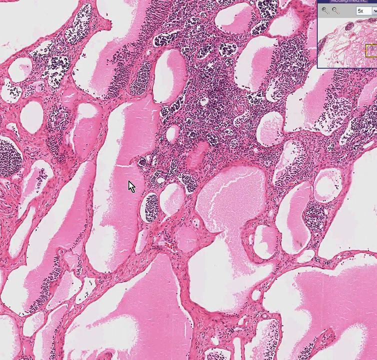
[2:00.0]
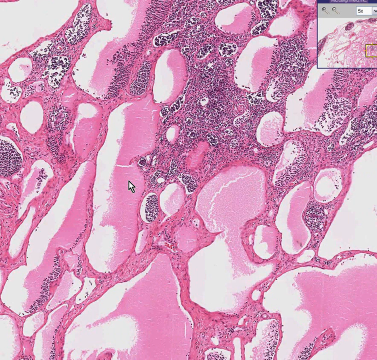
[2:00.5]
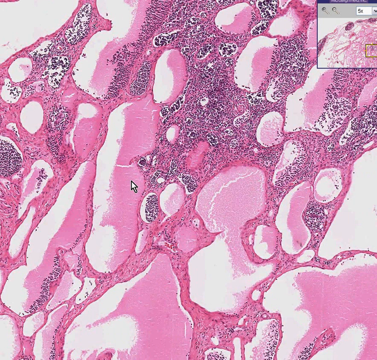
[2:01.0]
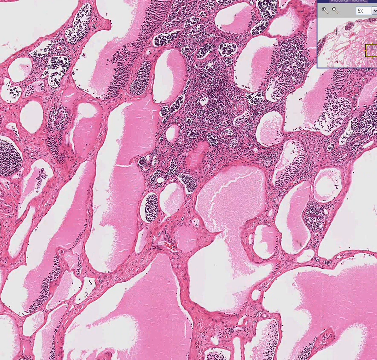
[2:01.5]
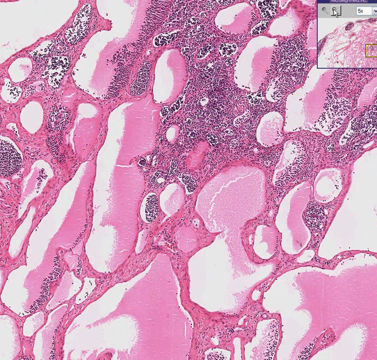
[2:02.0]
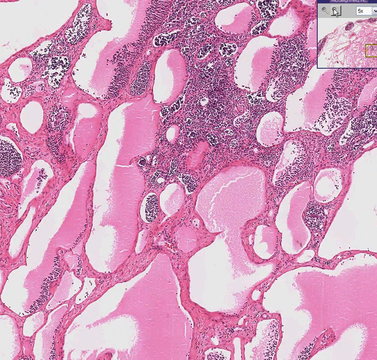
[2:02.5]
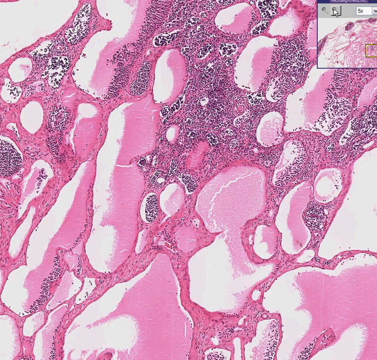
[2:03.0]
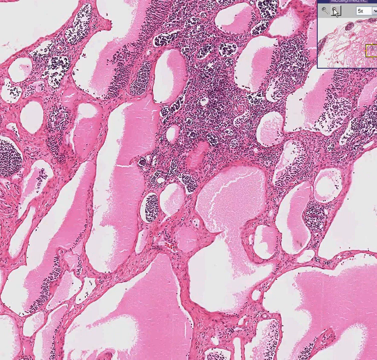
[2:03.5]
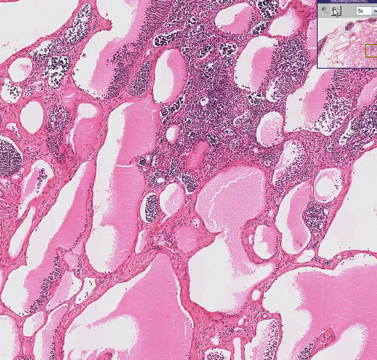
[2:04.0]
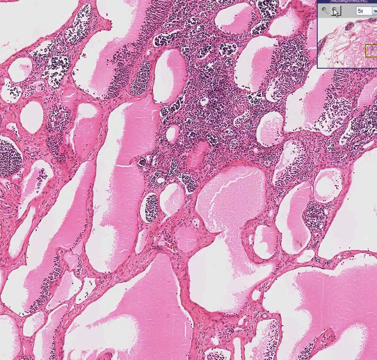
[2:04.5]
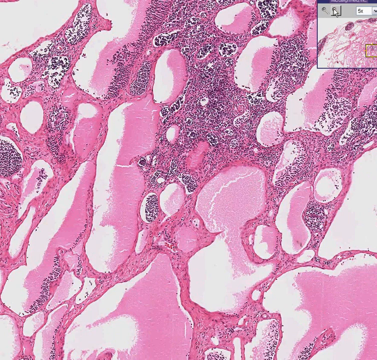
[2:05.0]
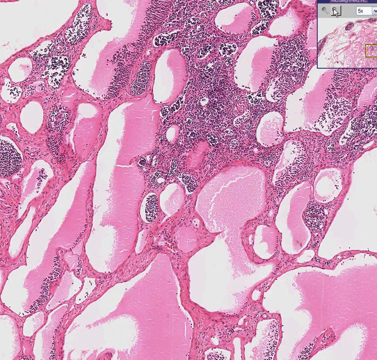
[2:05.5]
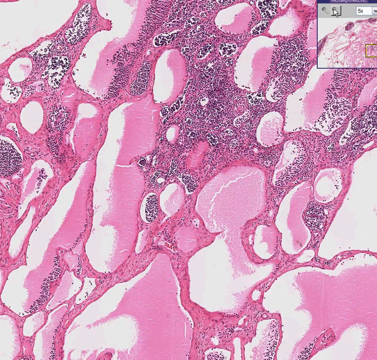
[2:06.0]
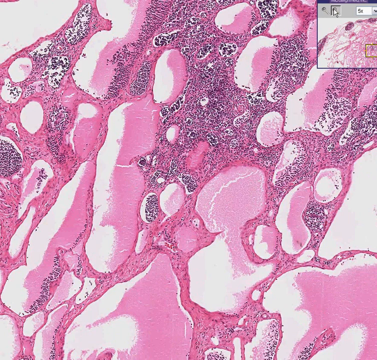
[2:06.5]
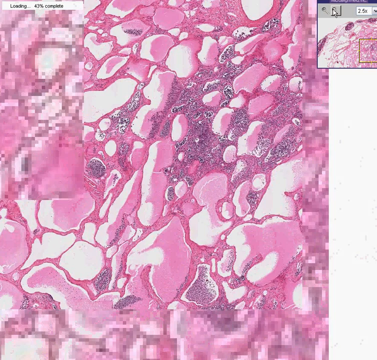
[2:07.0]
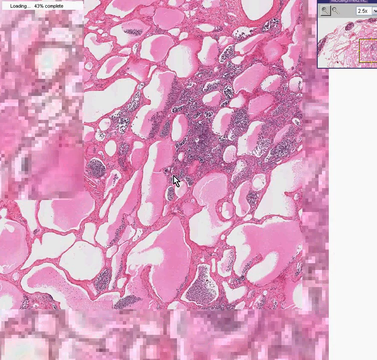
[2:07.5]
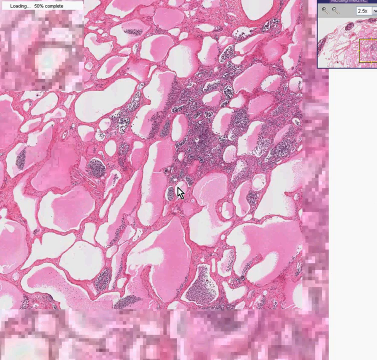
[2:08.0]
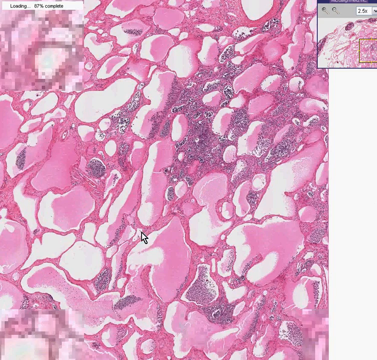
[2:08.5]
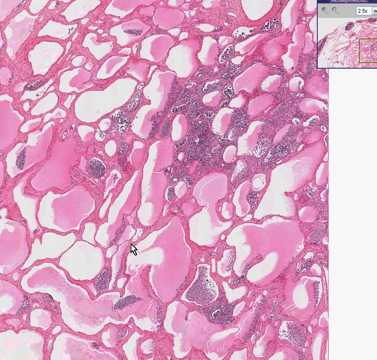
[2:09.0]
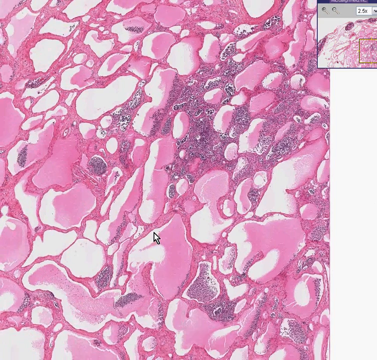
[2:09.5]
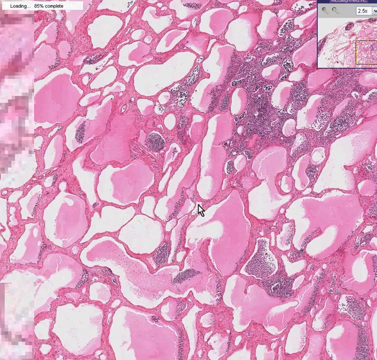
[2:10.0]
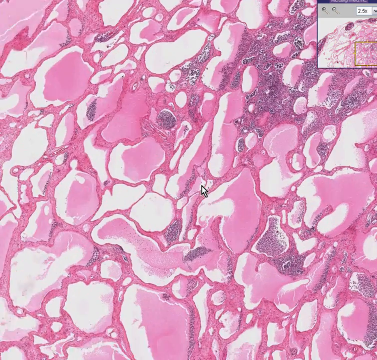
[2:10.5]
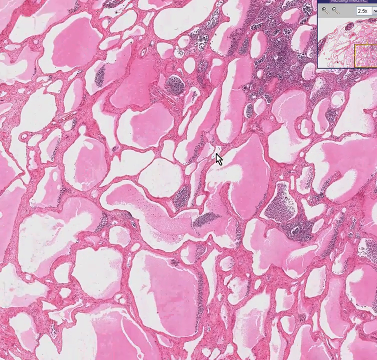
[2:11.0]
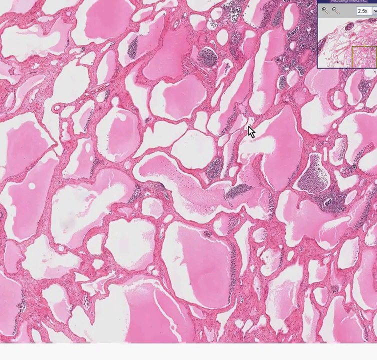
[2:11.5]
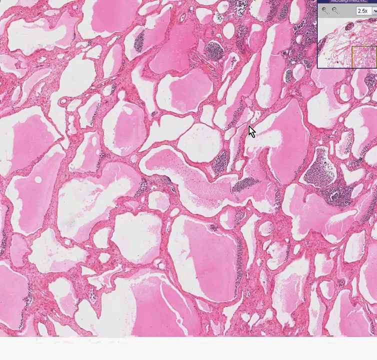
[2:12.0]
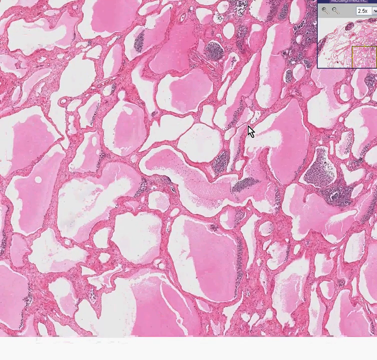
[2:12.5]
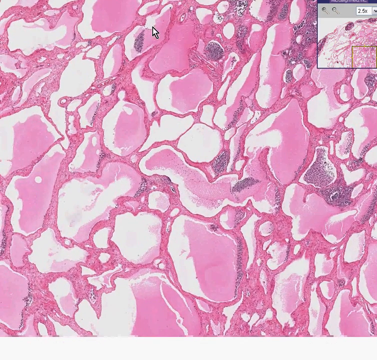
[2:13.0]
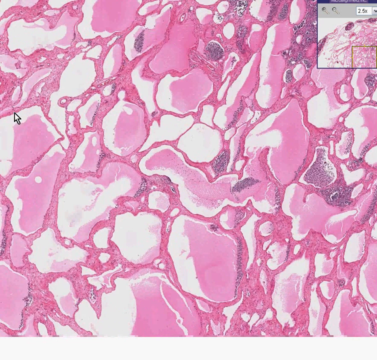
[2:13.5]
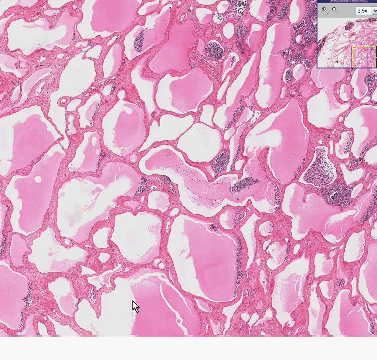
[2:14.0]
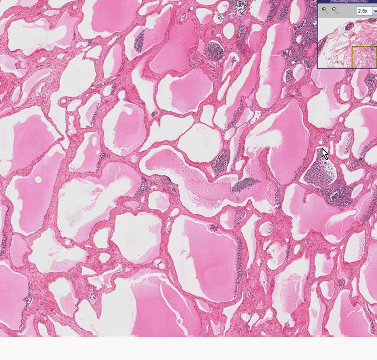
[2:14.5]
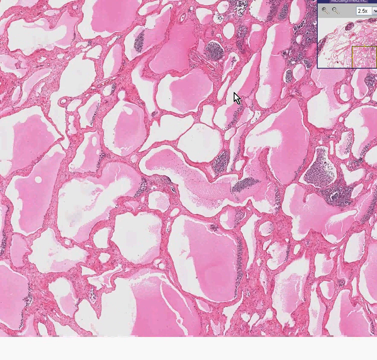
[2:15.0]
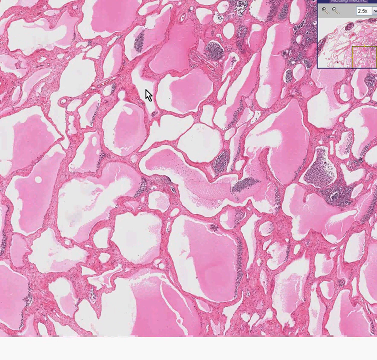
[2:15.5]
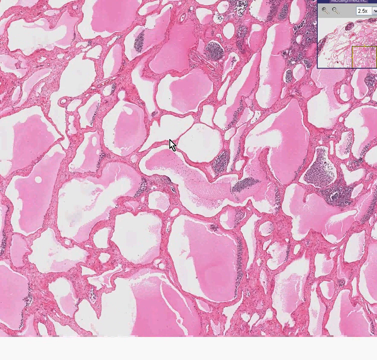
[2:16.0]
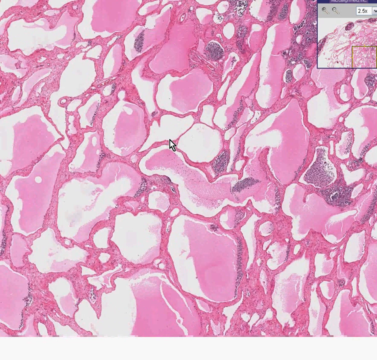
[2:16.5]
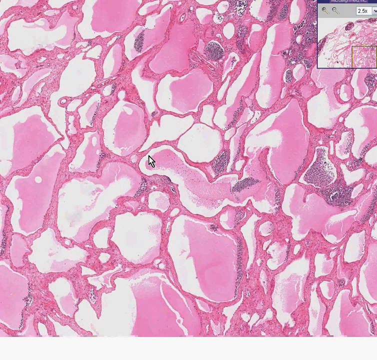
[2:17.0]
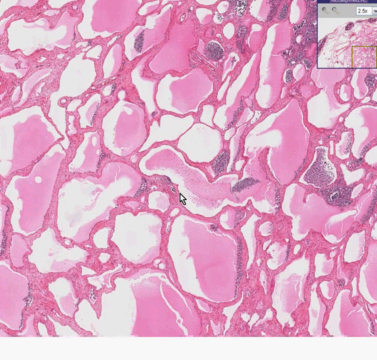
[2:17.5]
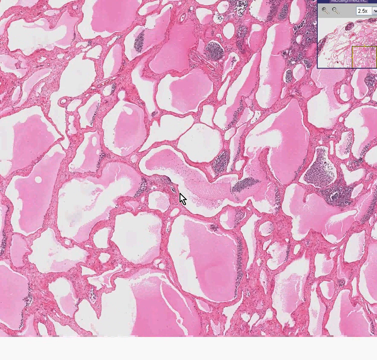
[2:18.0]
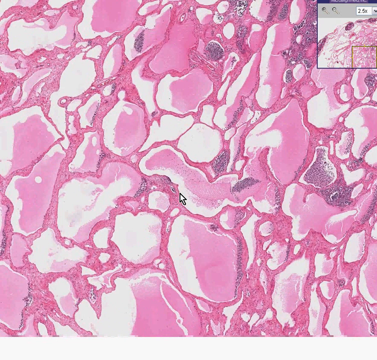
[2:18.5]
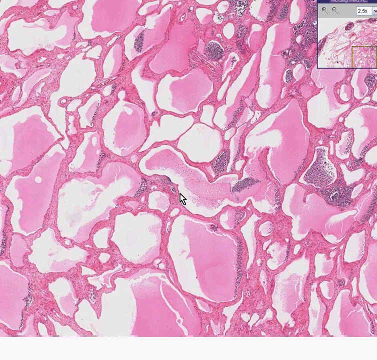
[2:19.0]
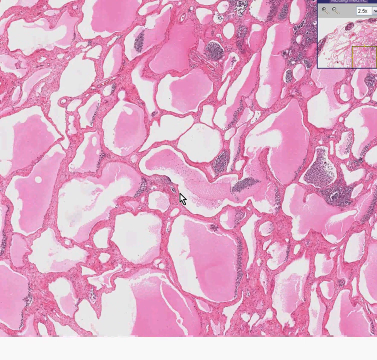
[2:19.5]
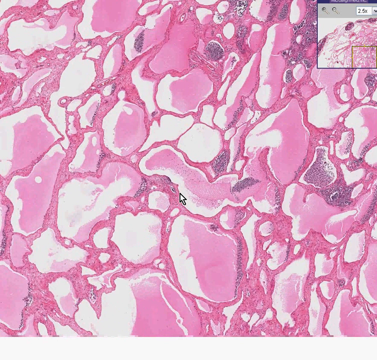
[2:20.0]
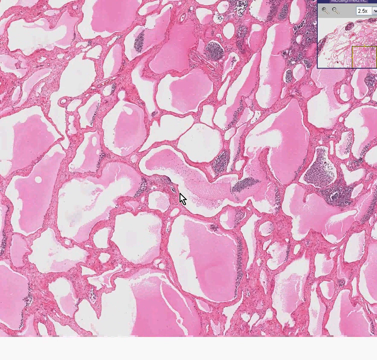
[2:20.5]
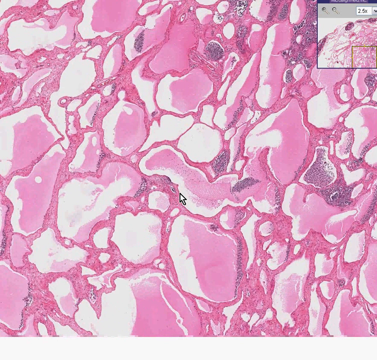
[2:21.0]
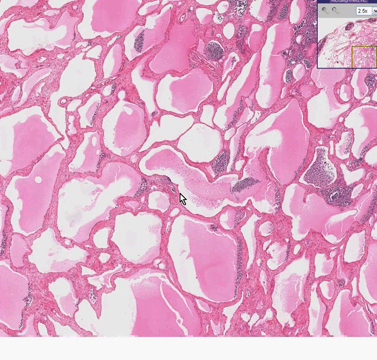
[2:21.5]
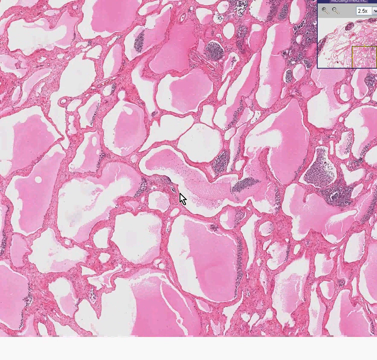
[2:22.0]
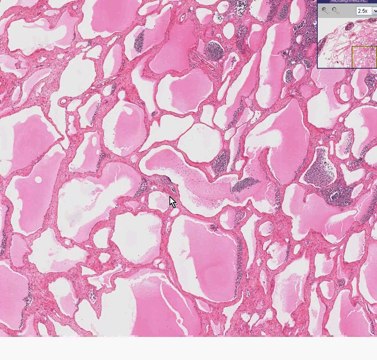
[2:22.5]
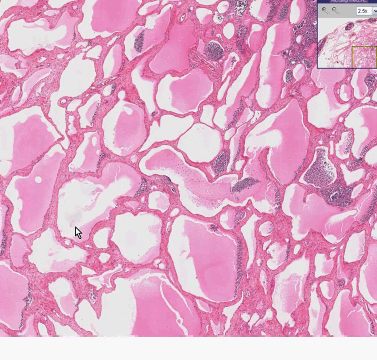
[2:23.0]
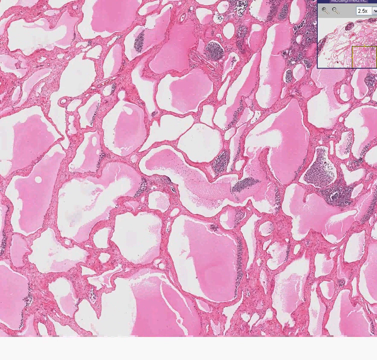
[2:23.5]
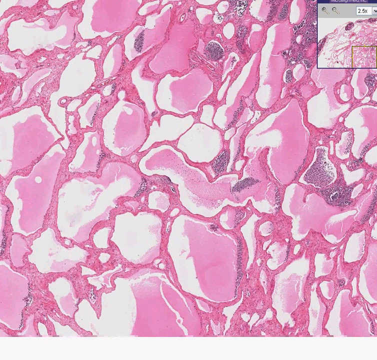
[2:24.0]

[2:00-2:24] The image shows a series of red and white shaded shapes and globs, kind of random, with not much completely white background. Many of them are shaded red on one side and white on the other, the completely red spaces are almost completely covered with black dots, and a few black dots touch the white areas. The user moves the mouse to the top corner and zooms in, then moves the image around, shifting it up and to the right. He makes a big circle with the mouse pointer, maybe pointing at something. The view looks completely covered in red and white shaded clusters, with a little red in the background and some black dots clustered on certain shapes rather than everywhere.